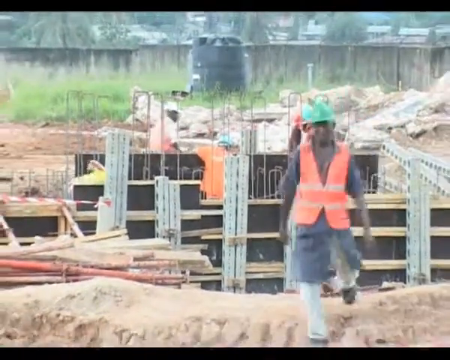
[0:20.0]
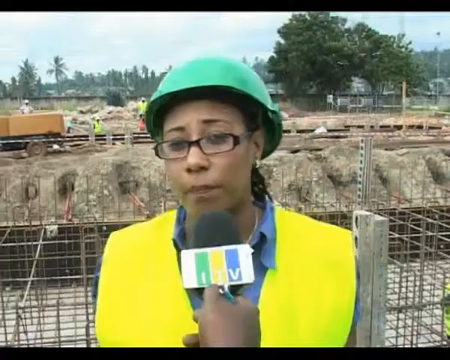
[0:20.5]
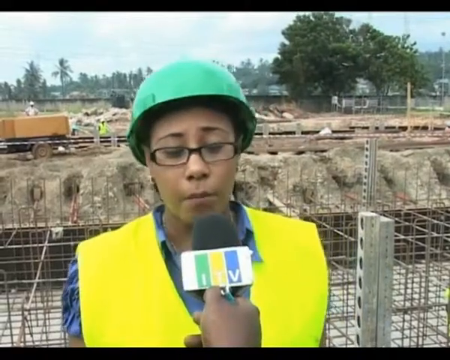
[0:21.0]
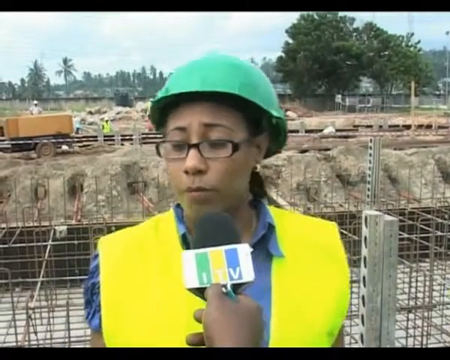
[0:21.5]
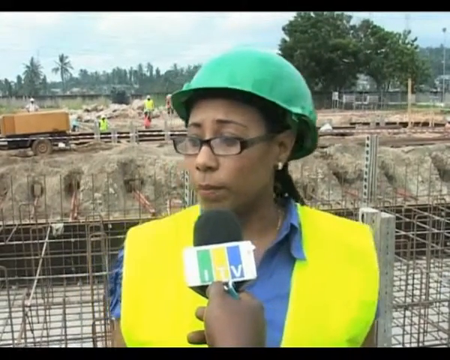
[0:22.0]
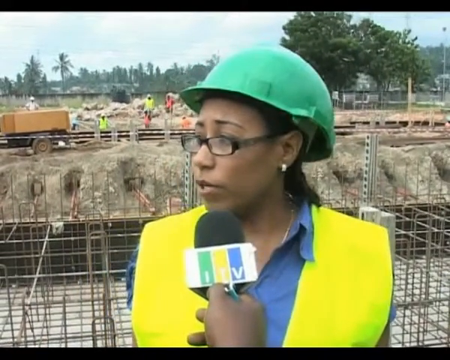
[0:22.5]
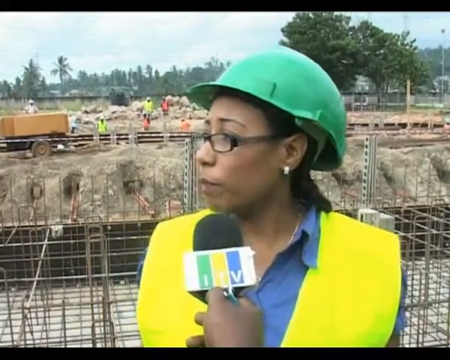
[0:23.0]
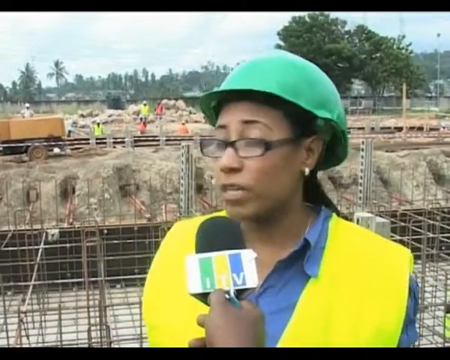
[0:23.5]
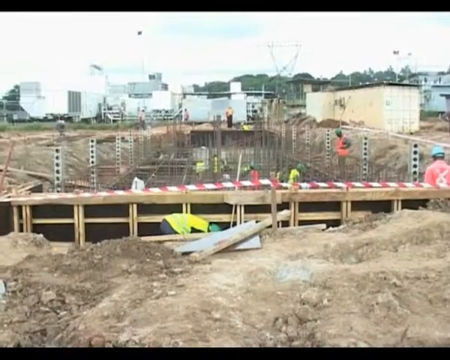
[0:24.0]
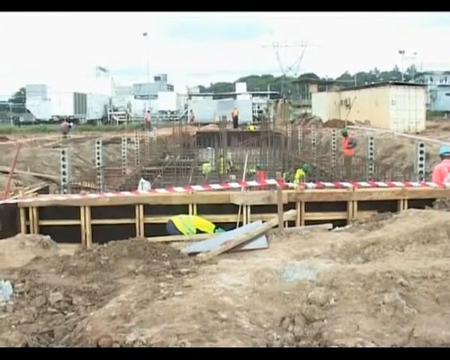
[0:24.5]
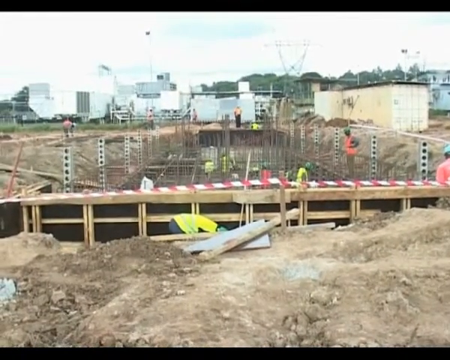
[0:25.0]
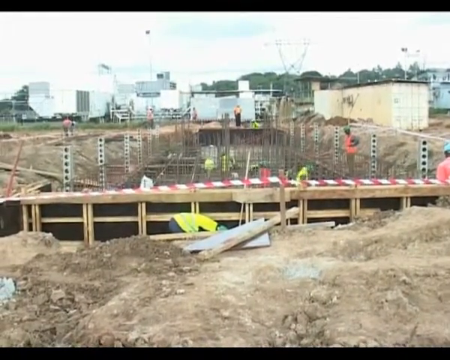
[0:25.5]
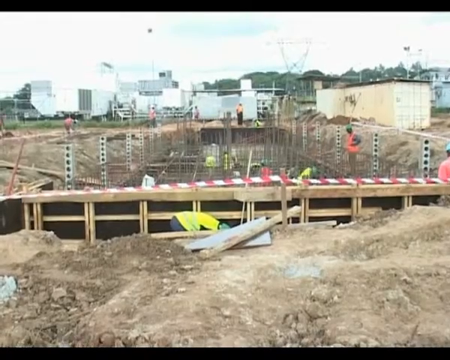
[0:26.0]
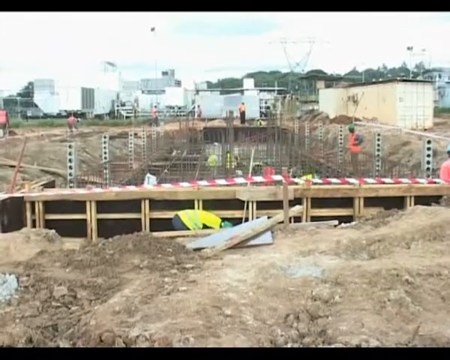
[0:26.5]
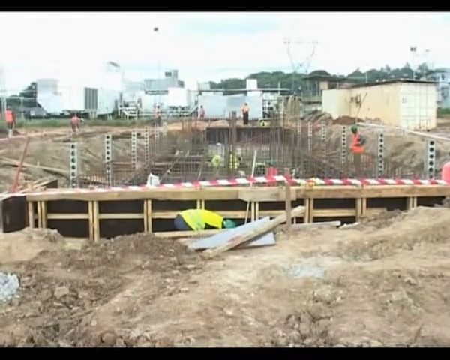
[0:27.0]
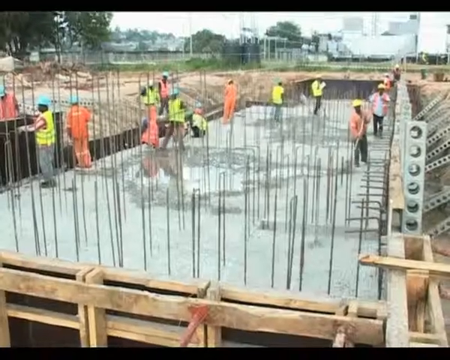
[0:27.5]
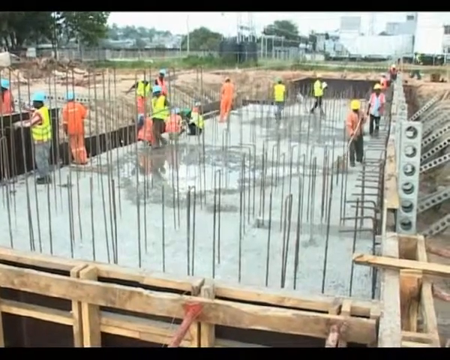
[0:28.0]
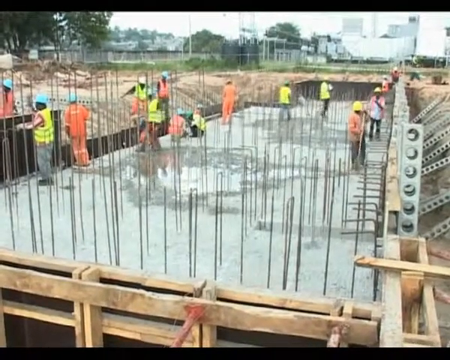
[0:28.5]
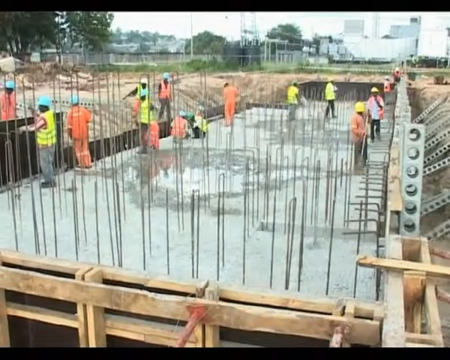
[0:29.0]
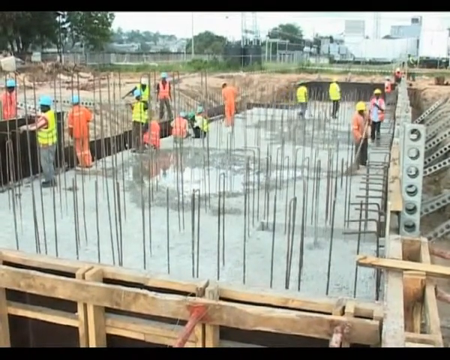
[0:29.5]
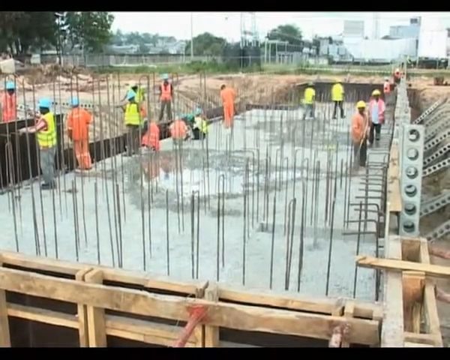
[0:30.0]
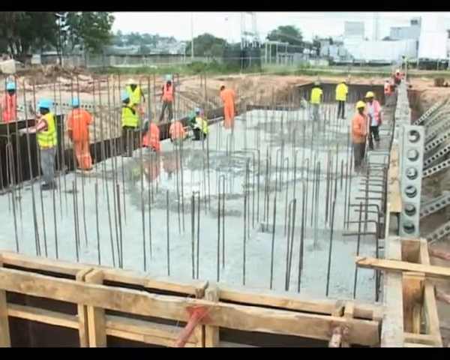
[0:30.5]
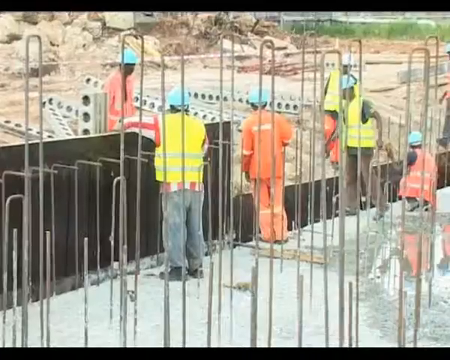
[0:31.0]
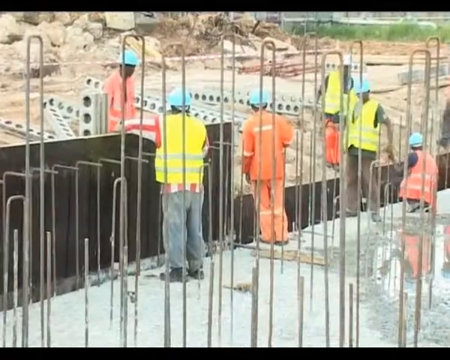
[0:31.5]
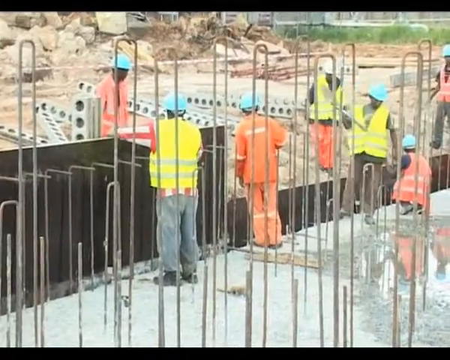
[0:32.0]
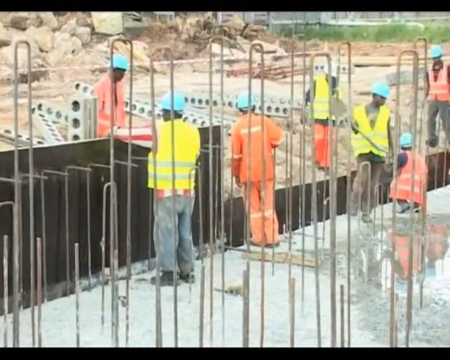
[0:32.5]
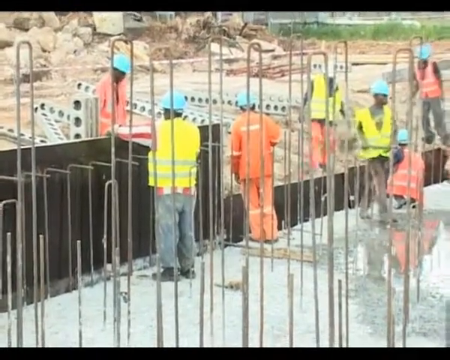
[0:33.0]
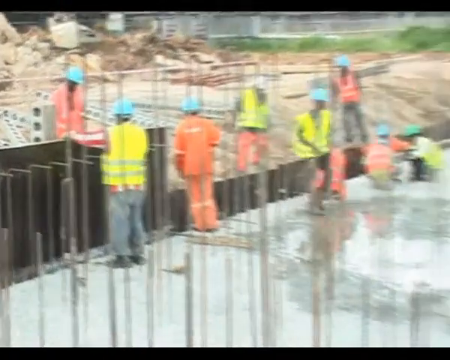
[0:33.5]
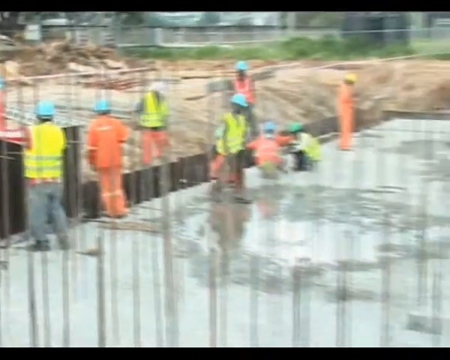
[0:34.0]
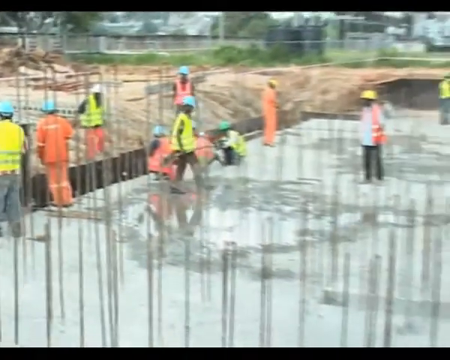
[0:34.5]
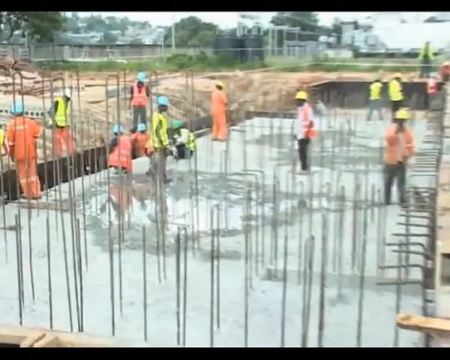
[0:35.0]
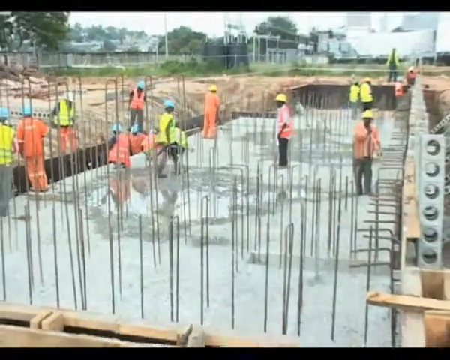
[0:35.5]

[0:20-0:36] At a construction site, one of the workers is being interviewed: a woman in a yellow safety vest over a blue shirt, with a green safety helmet and a pair of glasses. The reporter's hand holds the microphone, which has the TV station's inscription written across it on a green, yellow and blue background. Next, men walk in a dugout part of the ground containing metal rods and wooden scaffolding that form the foundation of a building. The men wear yellow safety vests, while some wear red safety vests. The camera gives a close-up view of them spreading wet cement on the foundation scaffolding with the bent metal rods in it. The men continue to work; there are about 20 men or so, most of them wearing blue safety helmets.